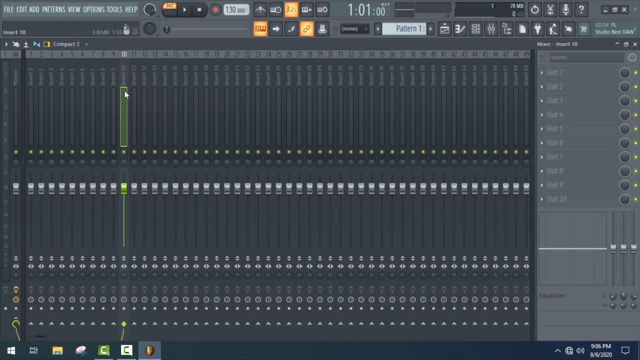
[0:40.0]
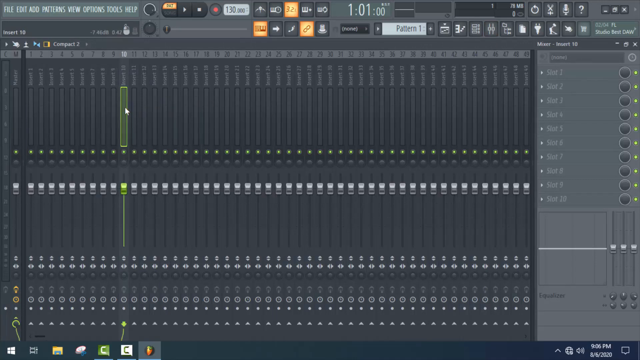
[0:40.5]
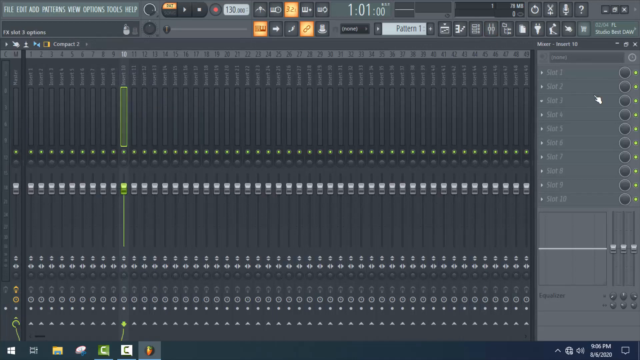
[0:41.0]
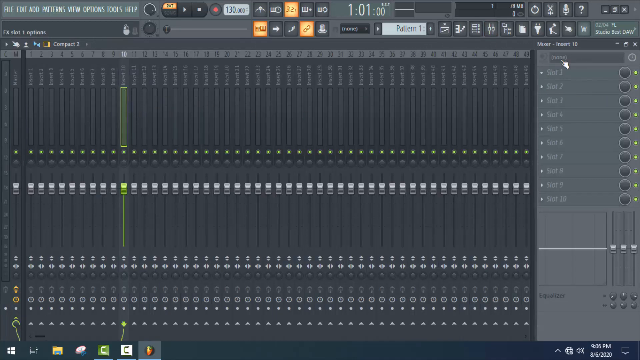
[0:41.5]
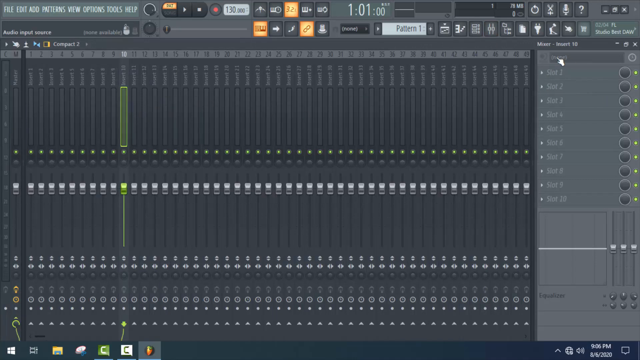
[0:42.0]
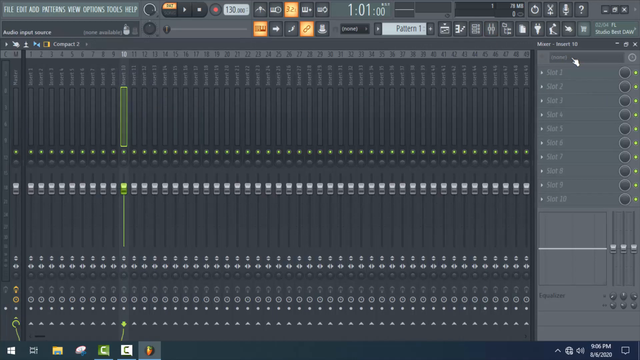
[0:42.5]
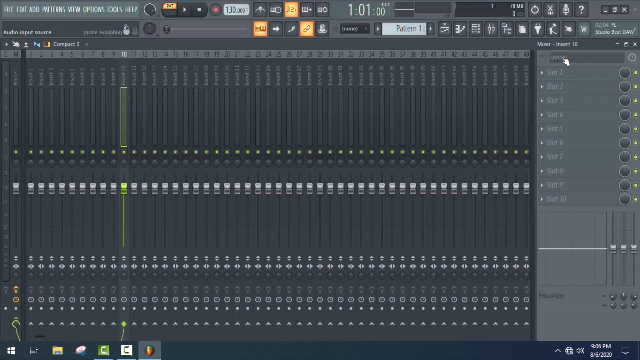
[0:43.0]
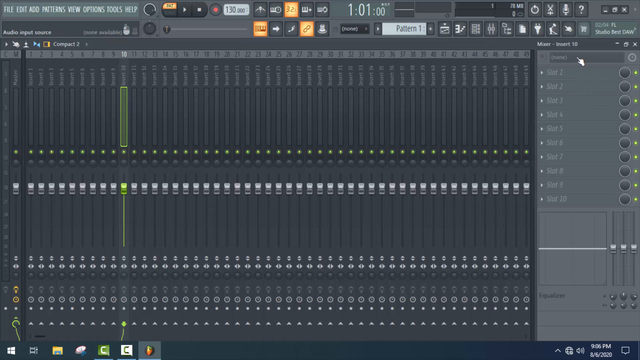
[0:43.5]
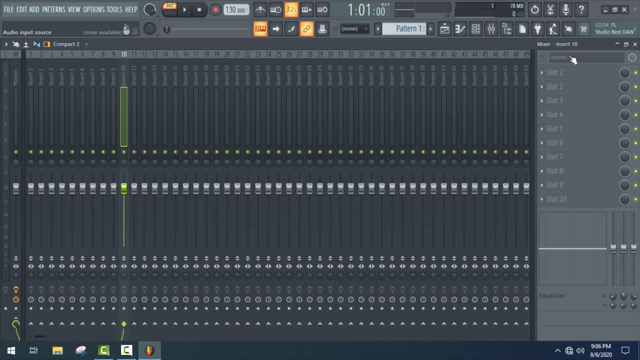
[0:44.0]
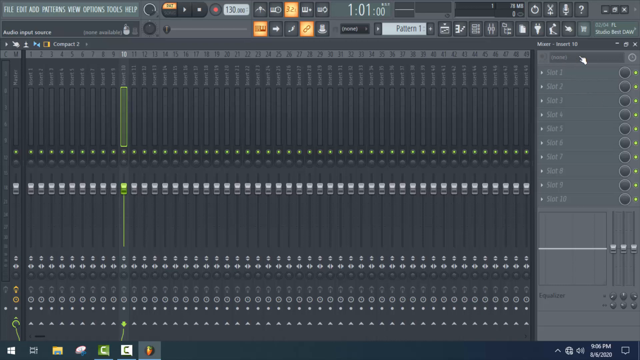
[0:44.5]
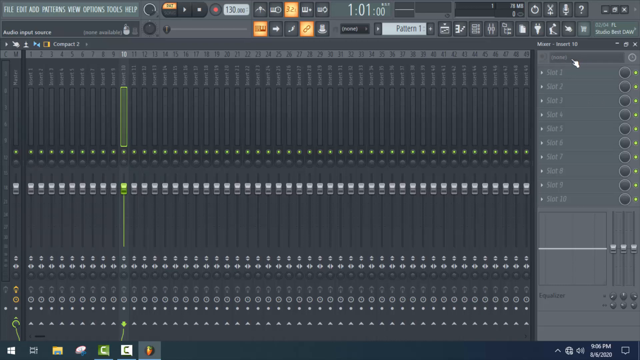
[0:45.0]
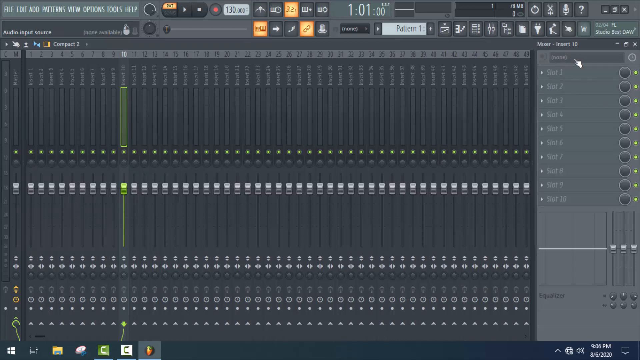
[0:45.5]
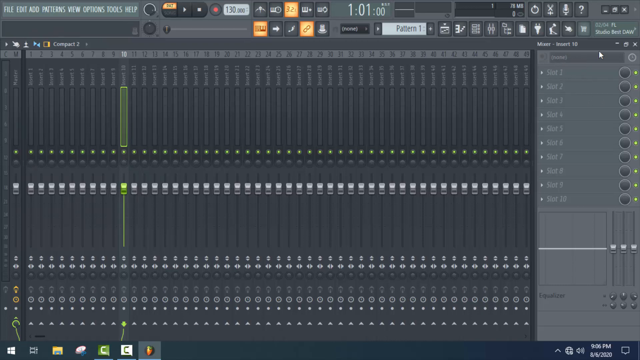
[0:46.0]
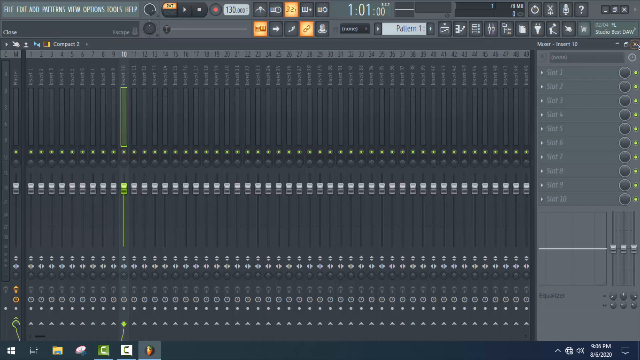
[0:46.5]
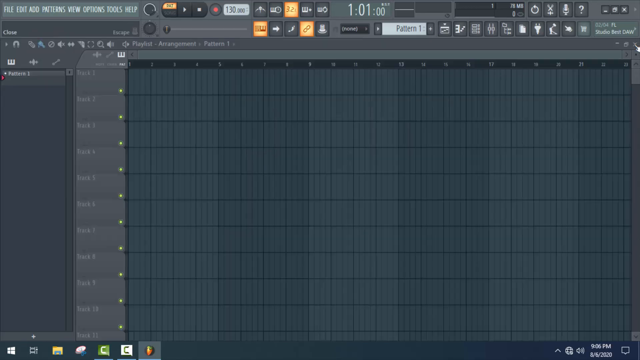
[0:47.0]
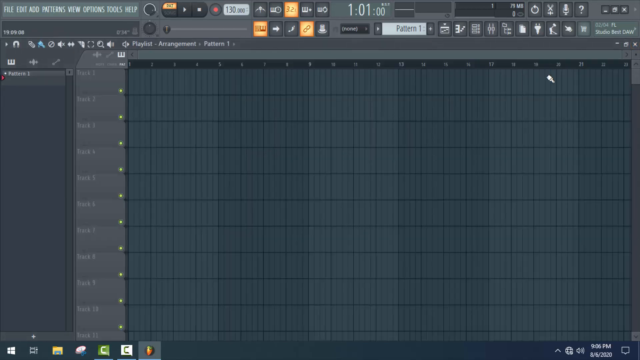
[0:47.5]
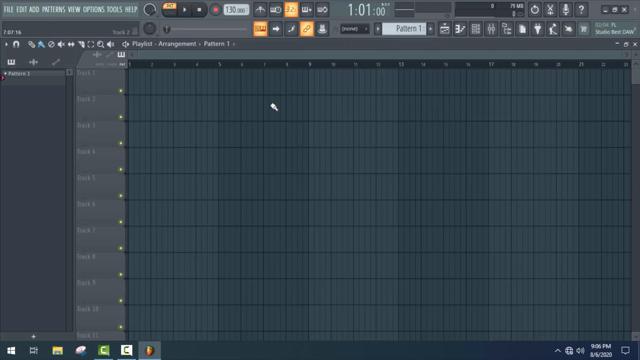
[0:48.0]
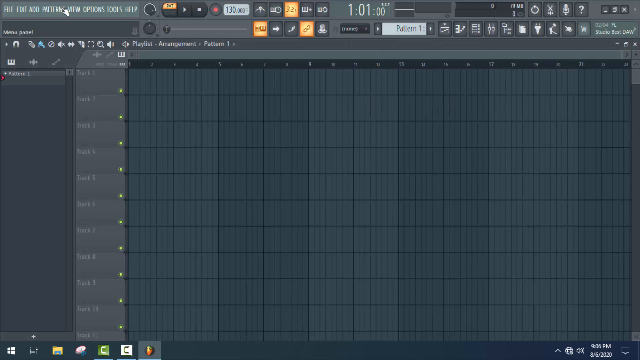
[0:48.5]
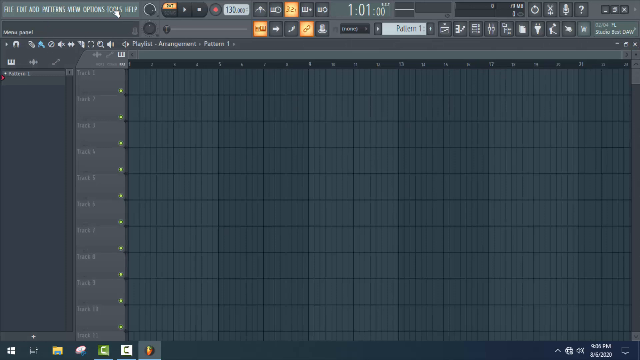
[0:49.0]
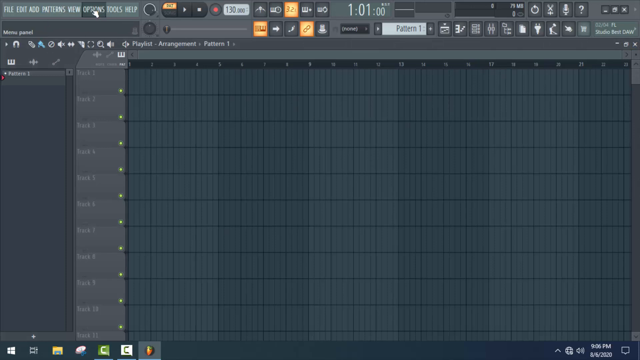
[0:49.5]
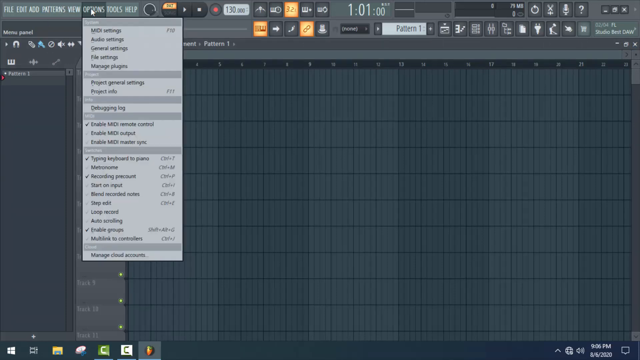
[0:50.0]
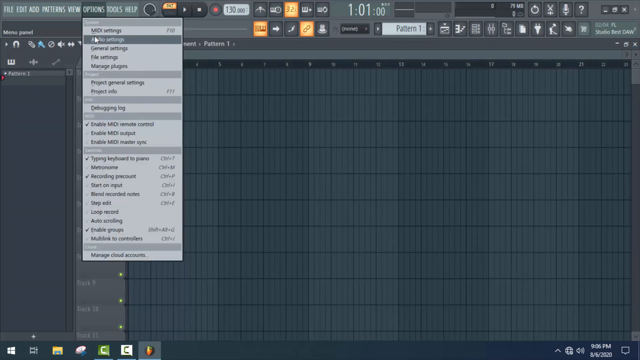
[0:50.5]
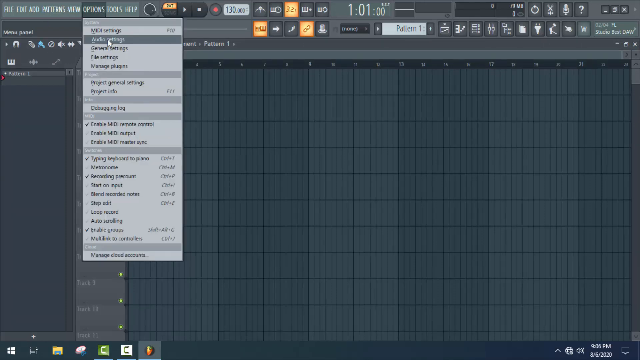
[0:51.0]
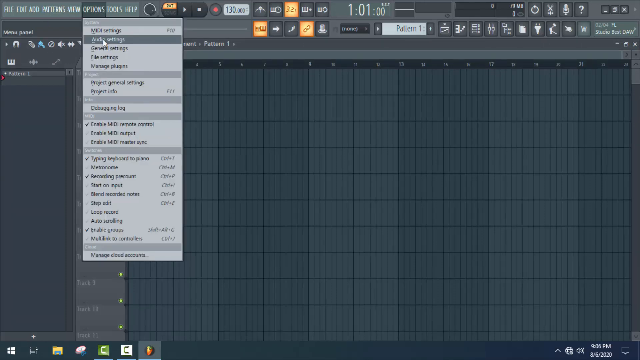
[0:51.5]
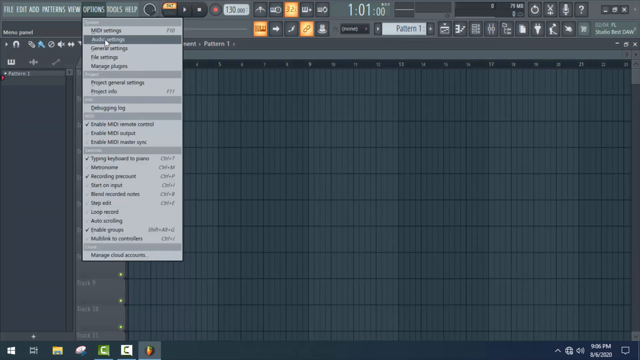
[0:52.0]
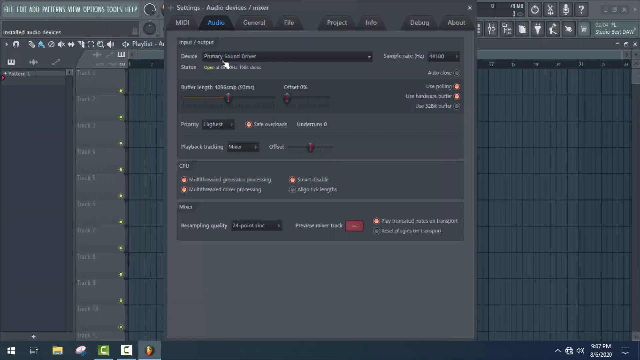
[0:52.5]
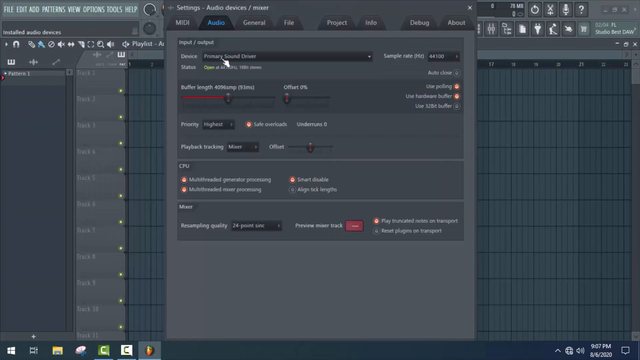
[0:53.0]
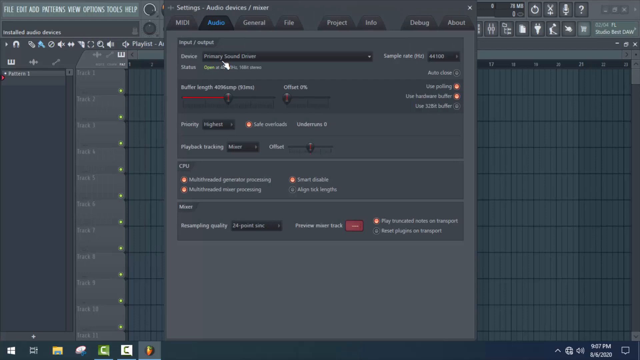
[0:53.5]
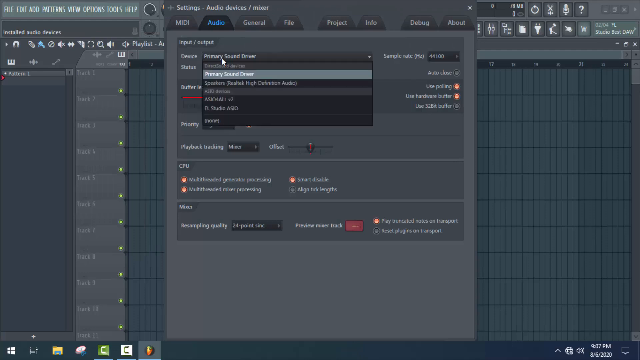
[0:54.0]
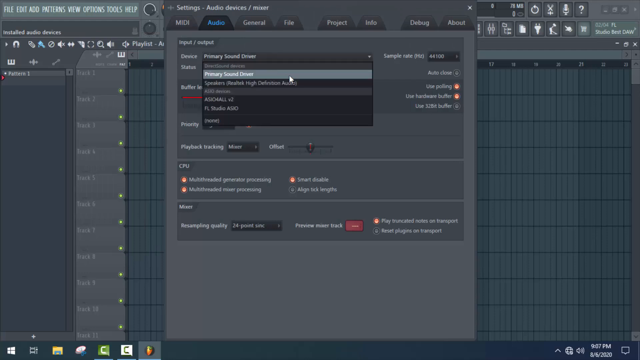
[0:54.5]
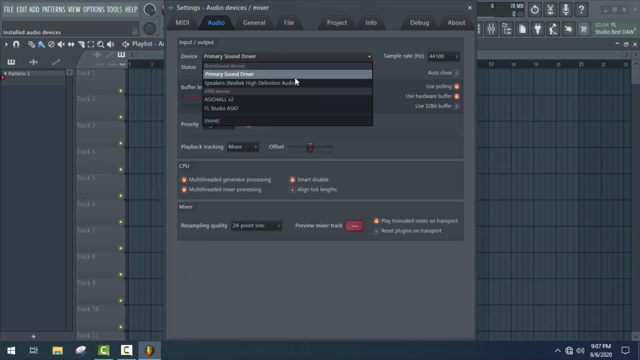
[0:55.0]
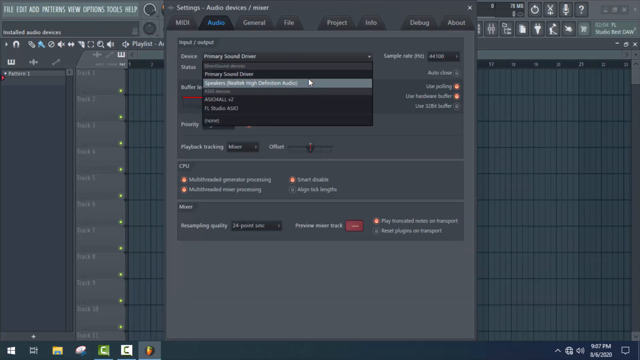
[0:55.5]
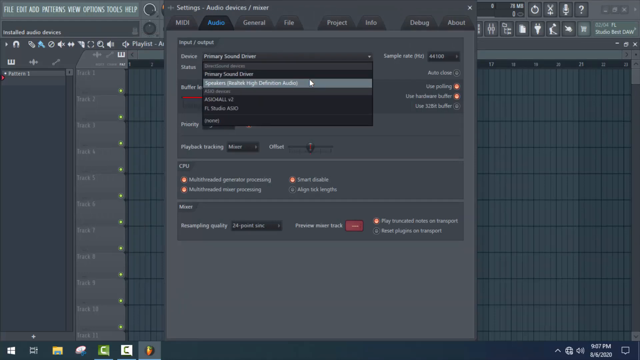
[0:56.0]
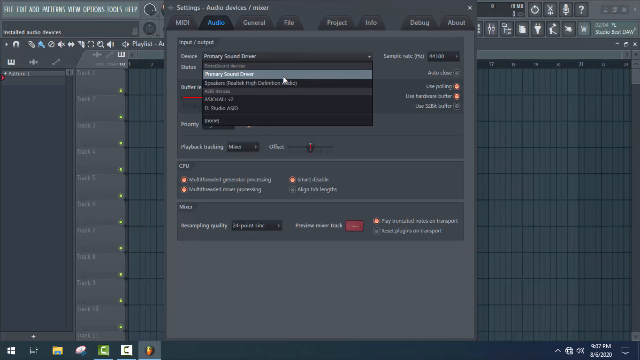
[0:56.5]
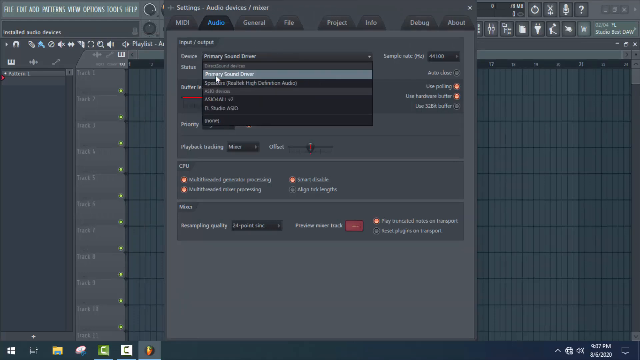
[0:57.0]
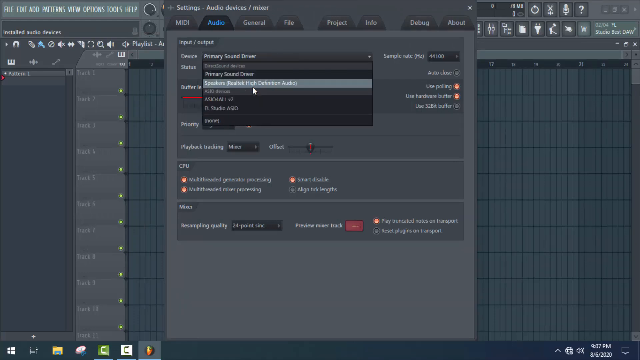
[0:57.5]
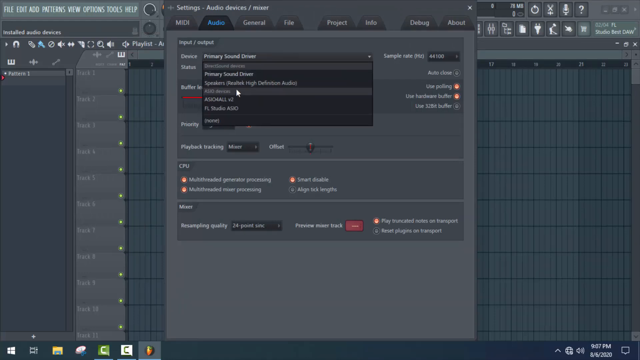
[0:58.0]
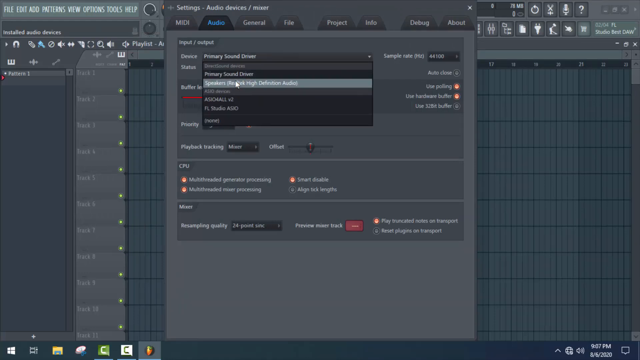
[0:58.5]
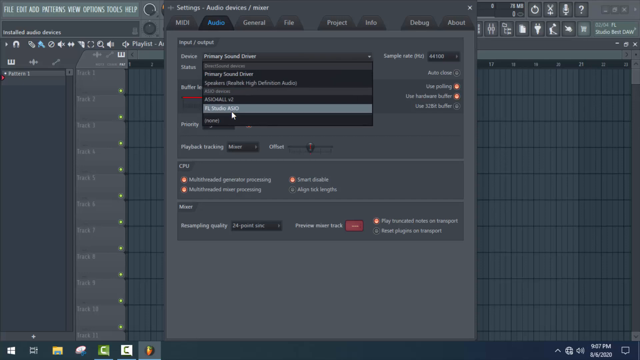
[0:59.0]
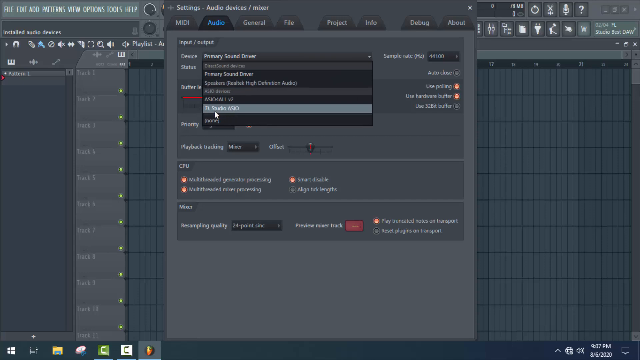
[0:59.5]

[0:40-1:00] The screen shows software that looks to be related to music or sound. The quality is too low to read the labels of the buttons he clicks, but he appears to be giving an introduction to where to find things and how to access certain features for beginners. The video is not very visually interactive.